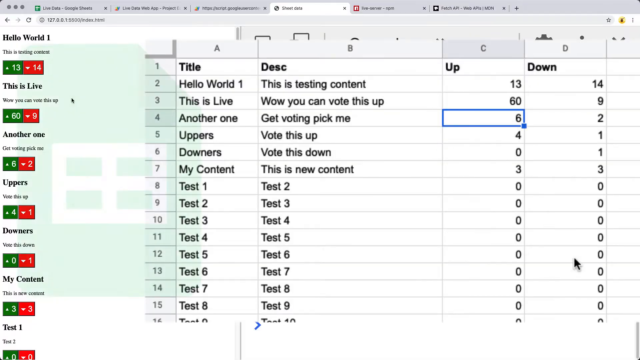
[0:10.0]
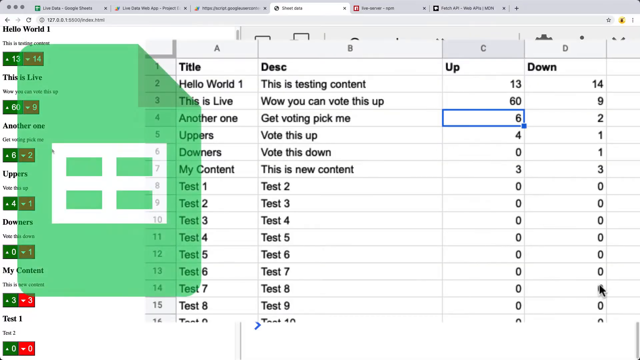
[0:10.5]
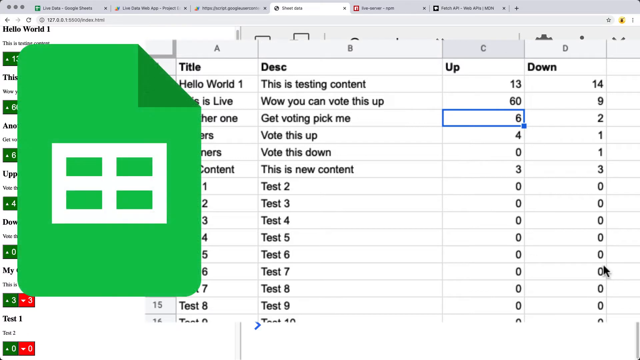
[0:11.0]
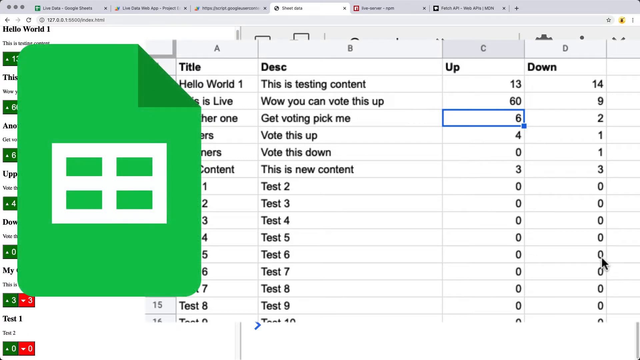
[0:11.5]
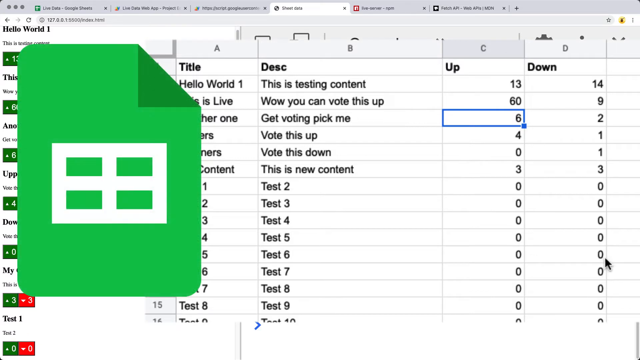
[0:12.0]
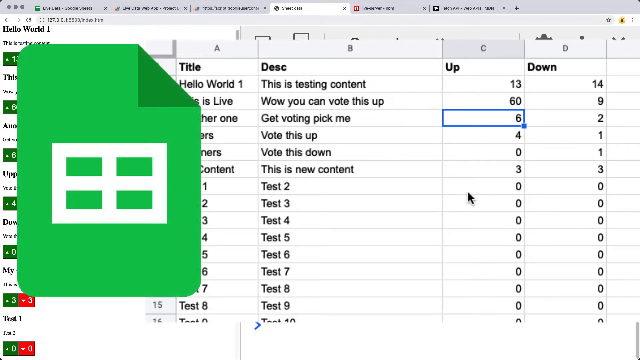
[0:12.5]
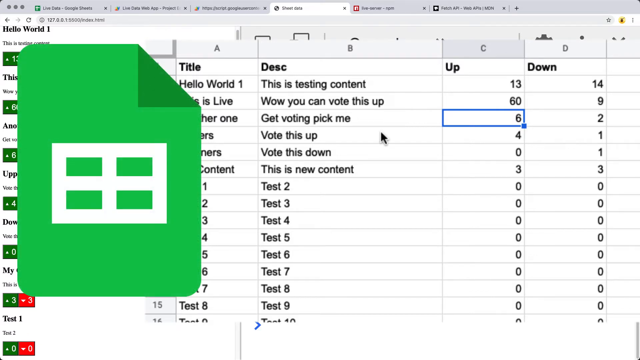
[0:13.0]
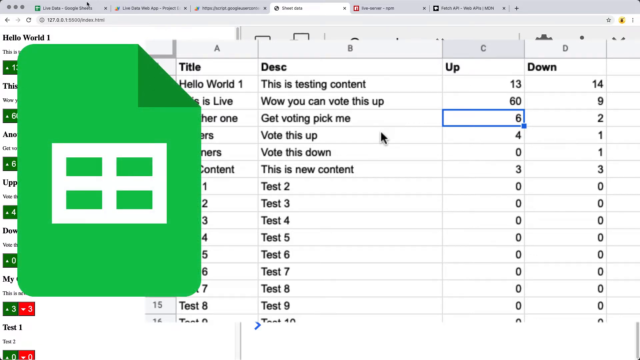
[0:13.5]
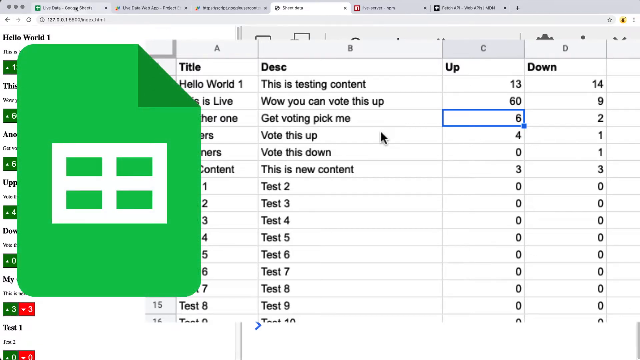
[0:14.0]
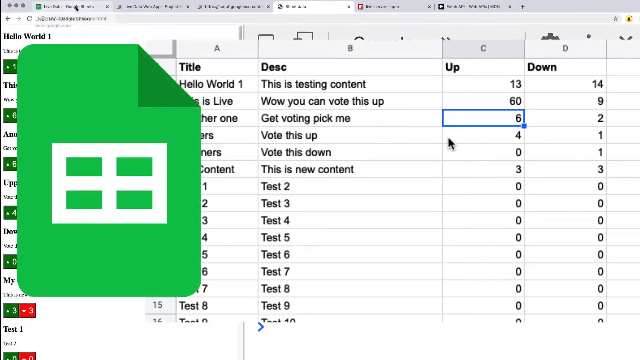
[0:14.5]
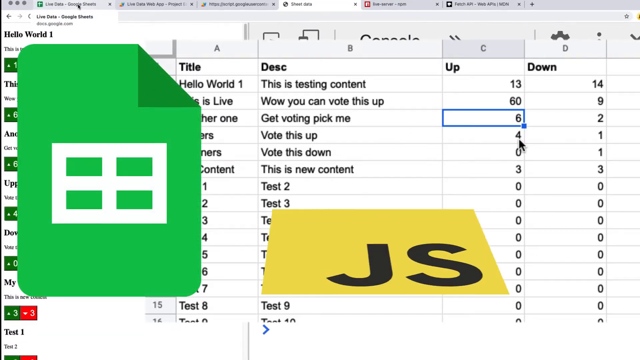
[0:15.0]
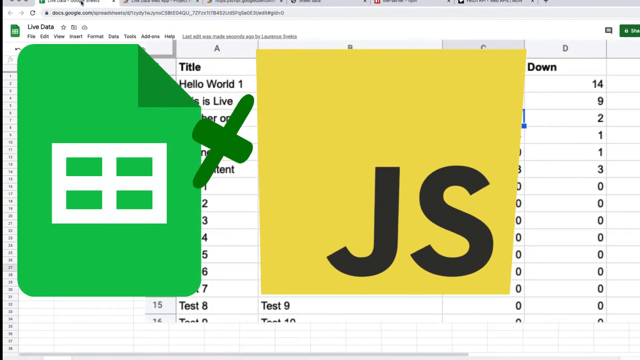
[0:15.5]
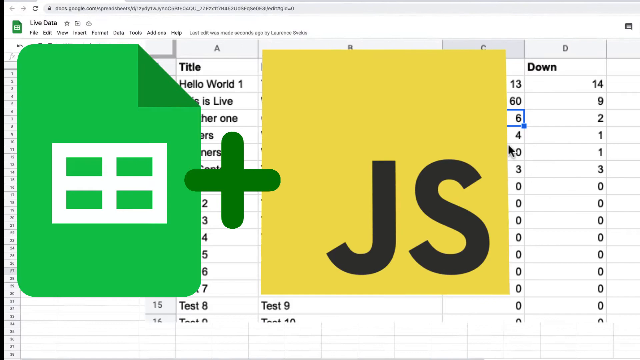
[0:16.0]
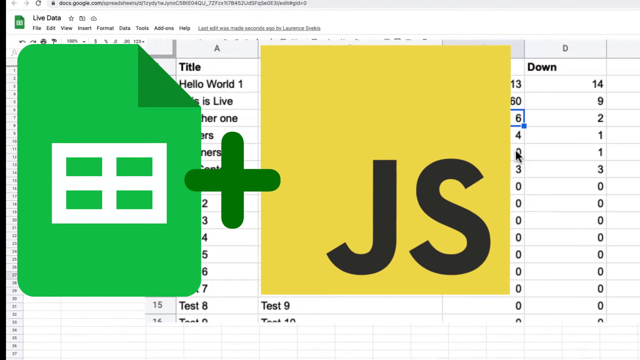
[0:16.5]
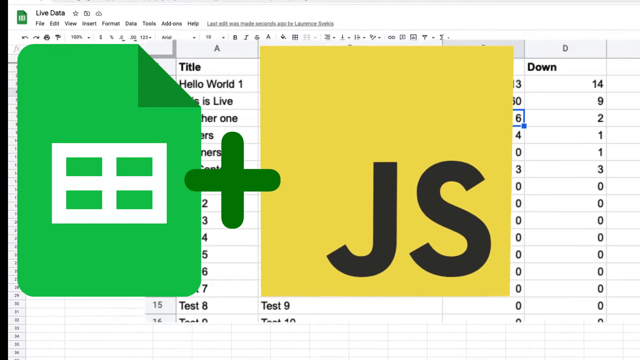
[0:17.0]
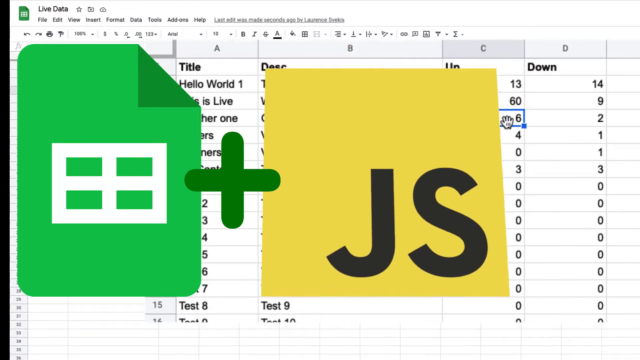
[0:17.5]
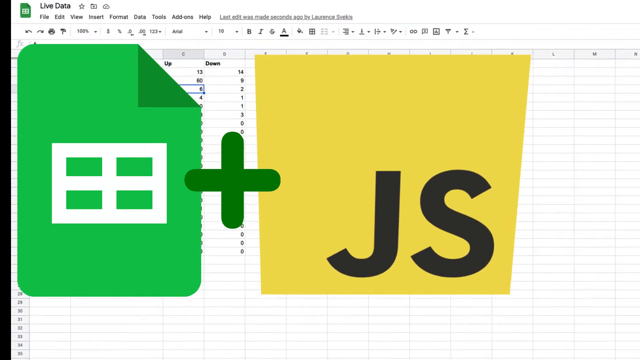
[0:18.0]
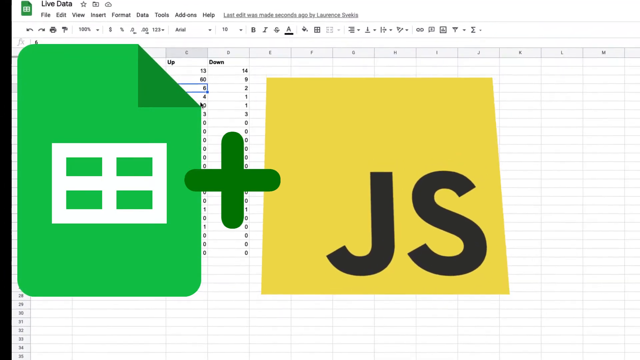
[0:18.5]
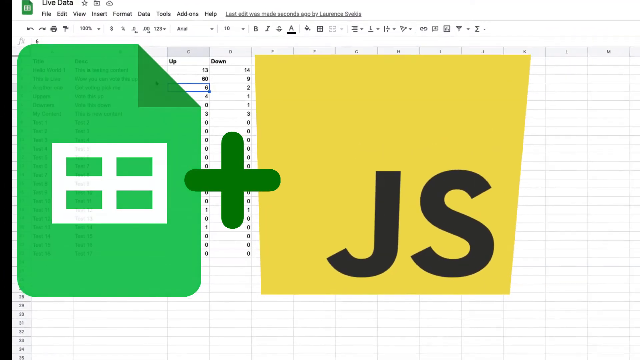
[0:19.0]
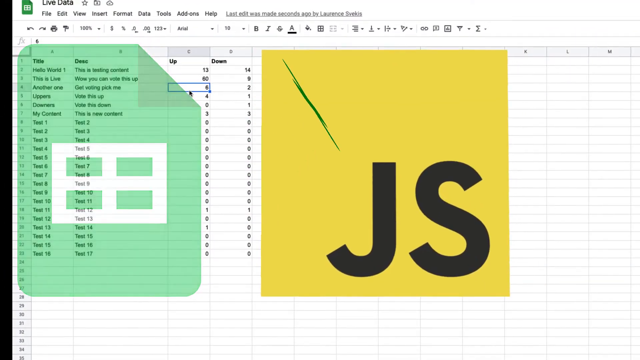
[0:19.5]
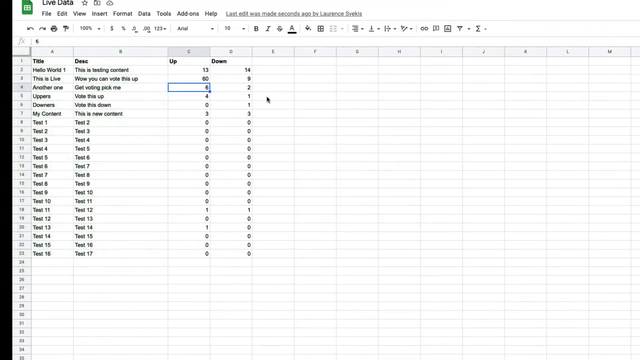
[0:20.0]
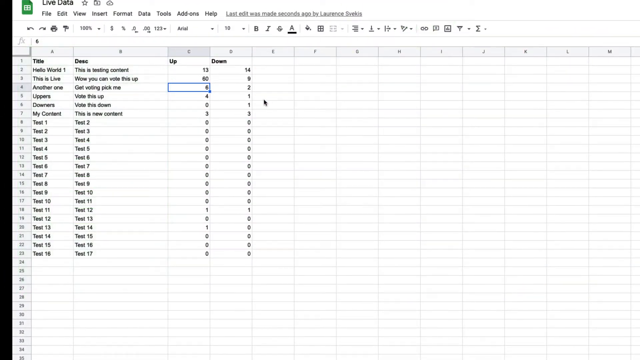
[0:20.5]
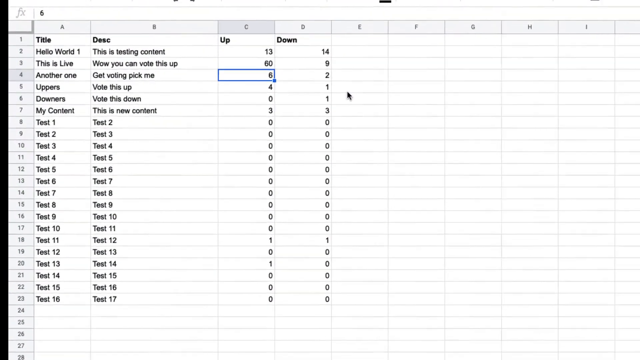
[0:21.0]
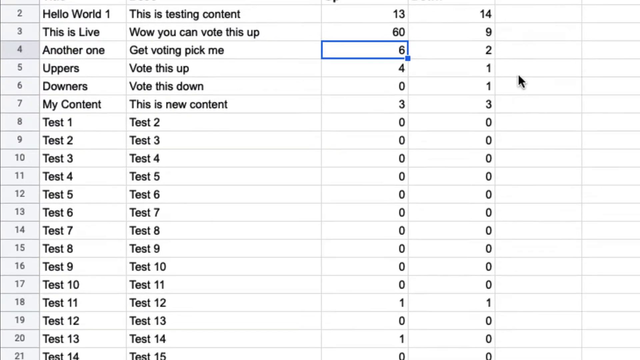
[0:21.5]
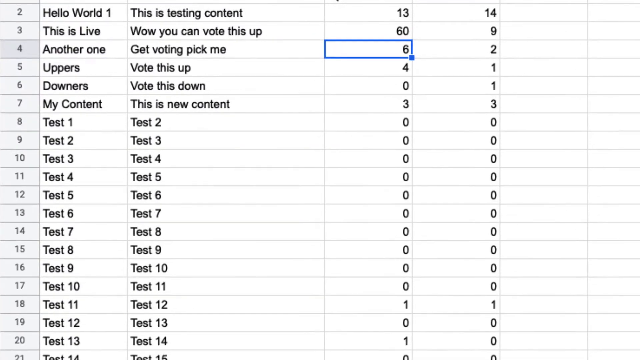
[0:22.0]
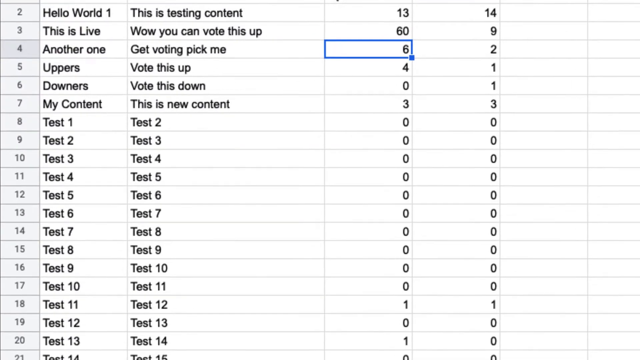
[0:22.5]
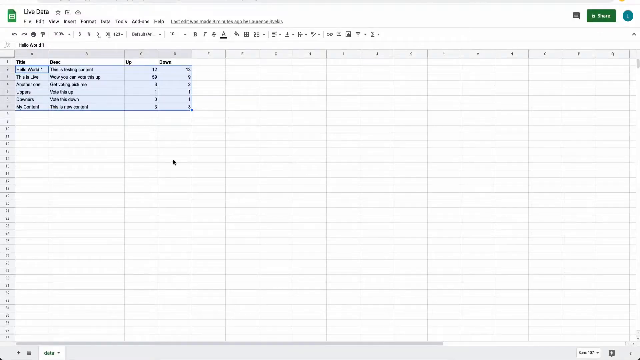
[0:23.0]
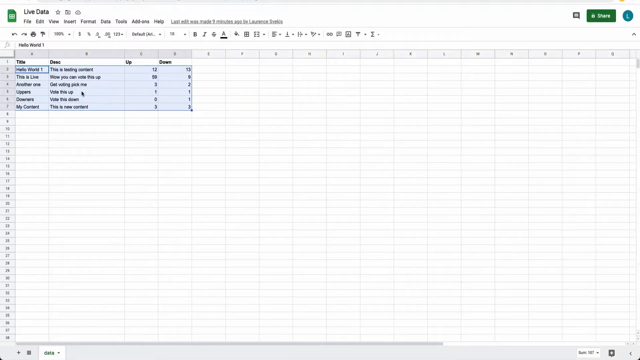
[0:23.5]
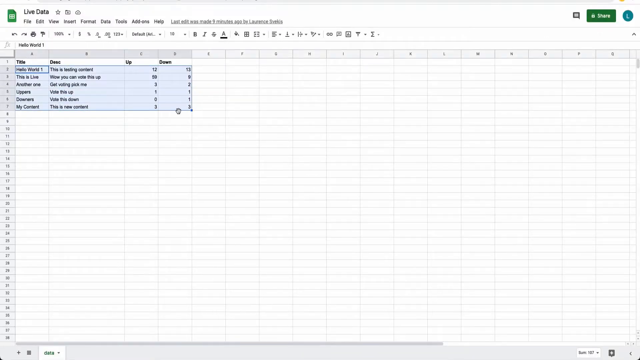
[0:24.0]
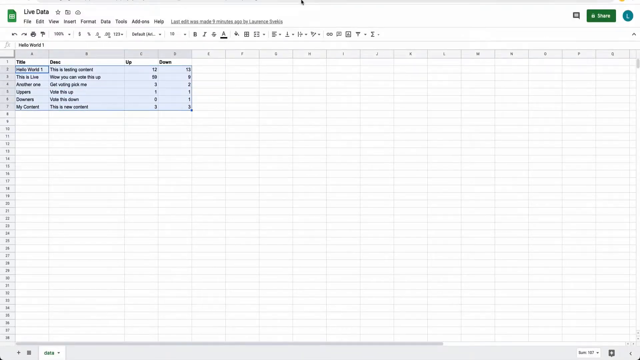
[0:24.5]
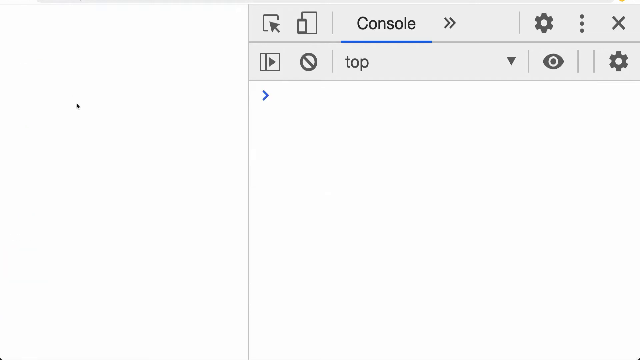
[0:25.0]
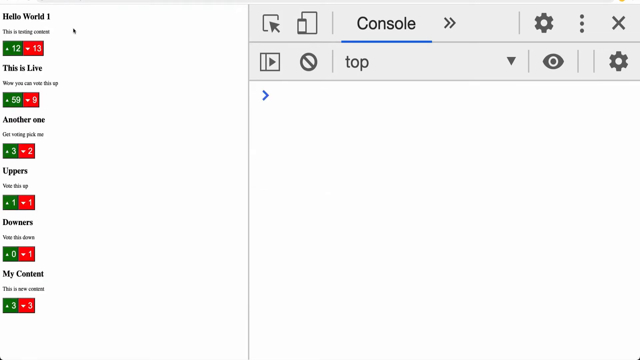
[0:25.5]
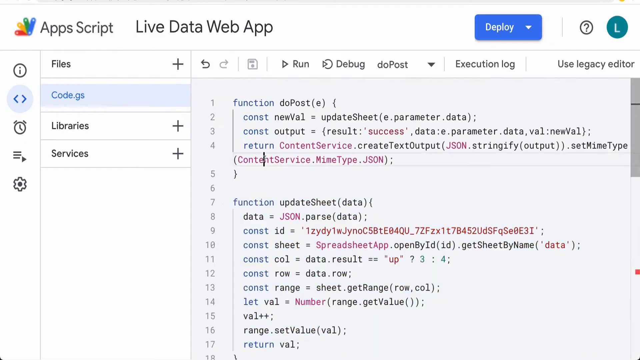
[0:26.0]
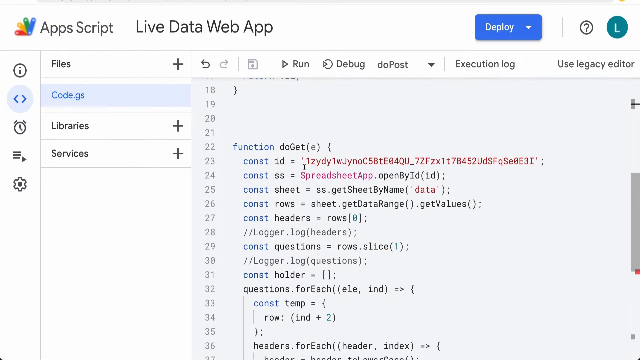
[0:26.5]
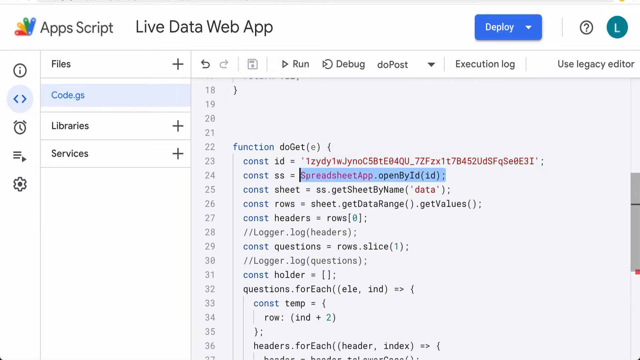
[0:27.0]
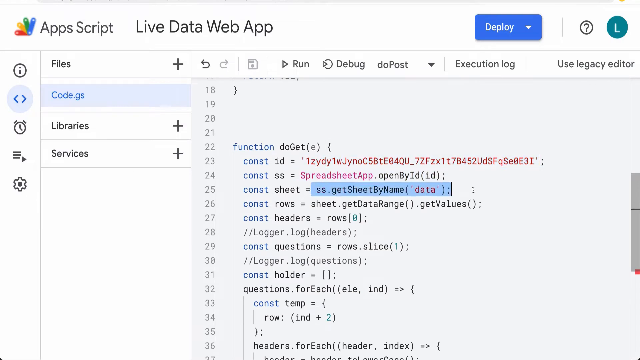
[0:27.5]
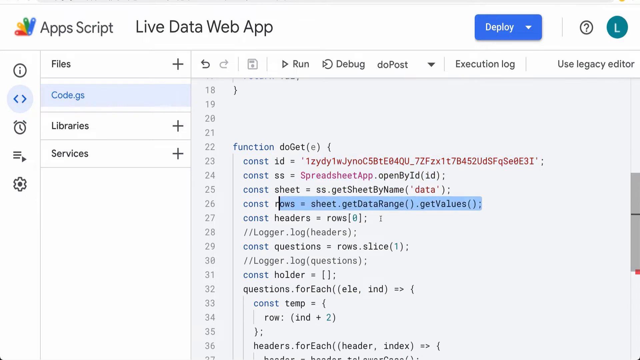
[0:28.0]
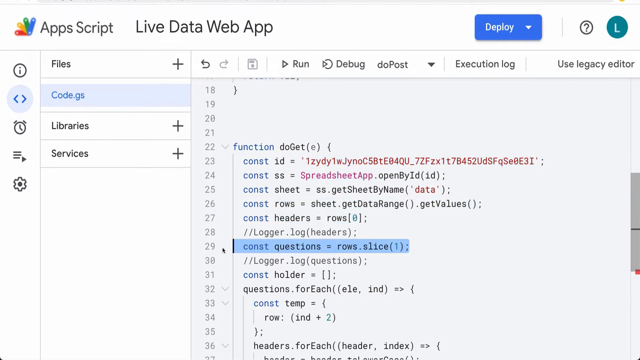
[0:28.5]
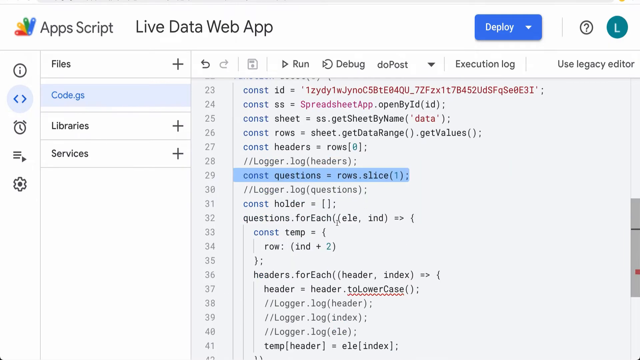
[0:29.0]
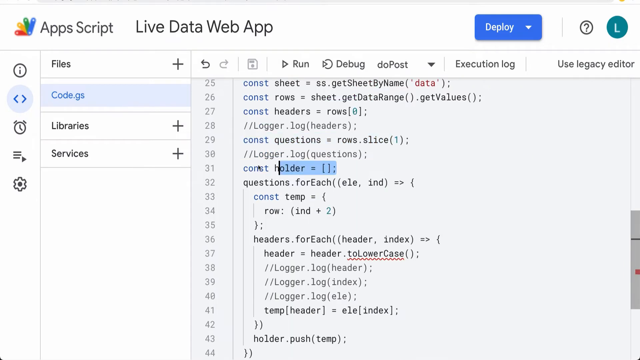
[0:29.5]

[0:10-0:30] The page shows an Excel-style sheet with many boxes containing numbers, which are written in Java. Column headings read title, disk, up and down; the title column is numbered from one counting upward, the disk column contains test entries in numbers, and there is an up and down section. There are also A, B and C sections. To the left are two boxes in green and red, shown under hide work 1. The numbers are clearly visible in the boxes, each number in its own box separate from the others. The white and black sheet looks the same as Excel.